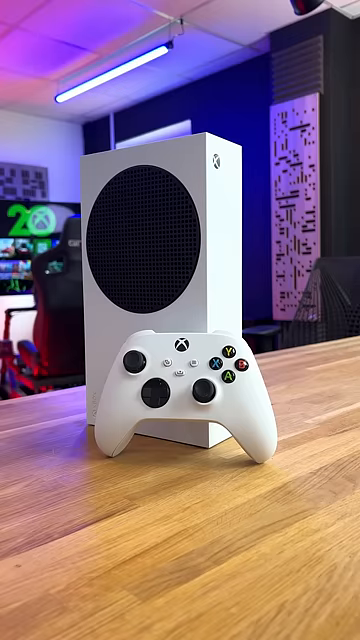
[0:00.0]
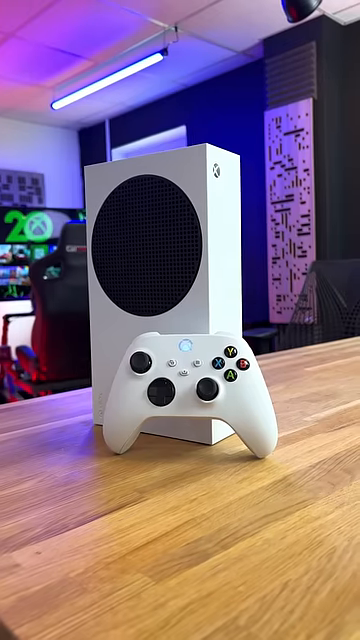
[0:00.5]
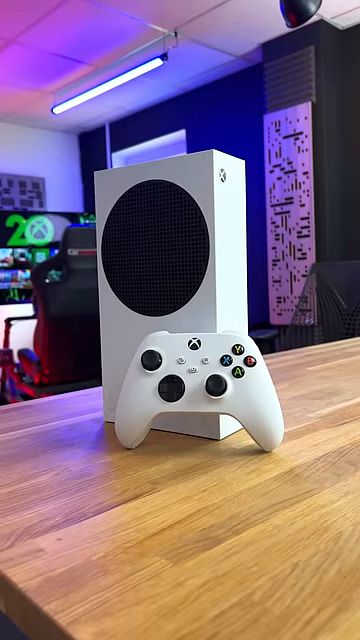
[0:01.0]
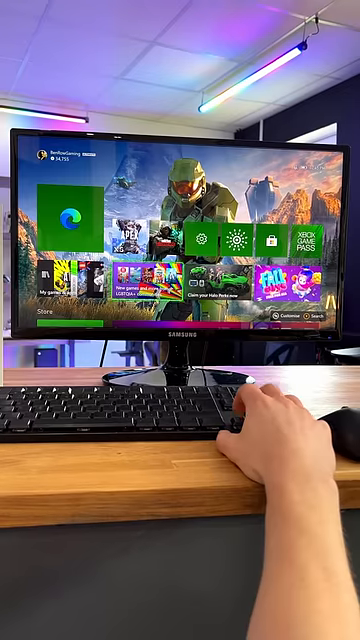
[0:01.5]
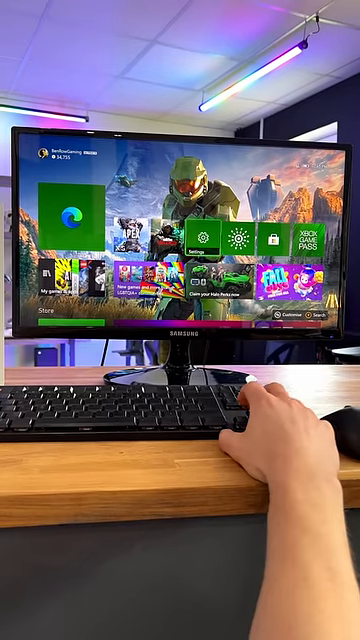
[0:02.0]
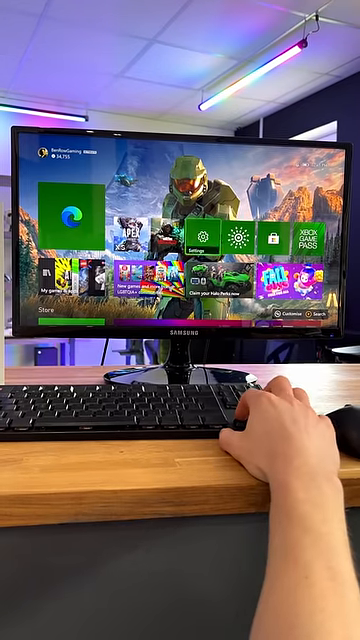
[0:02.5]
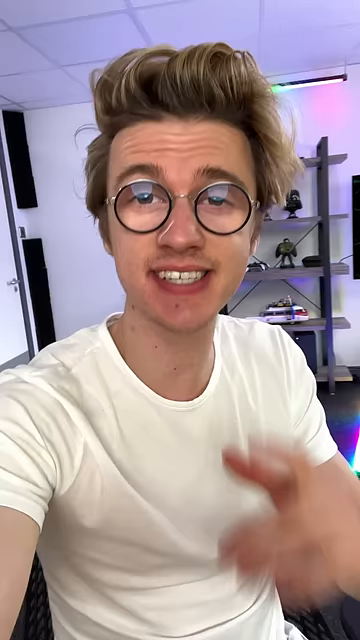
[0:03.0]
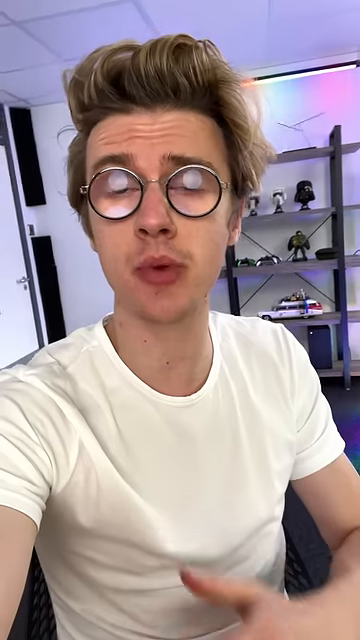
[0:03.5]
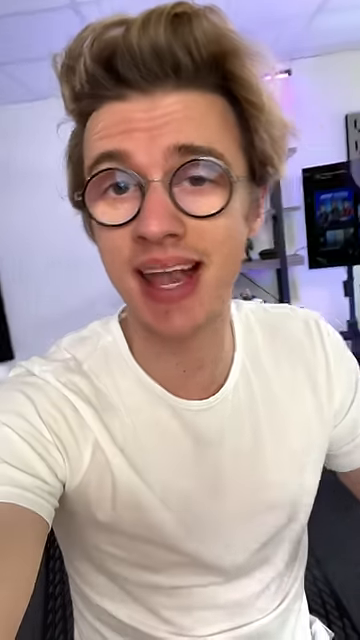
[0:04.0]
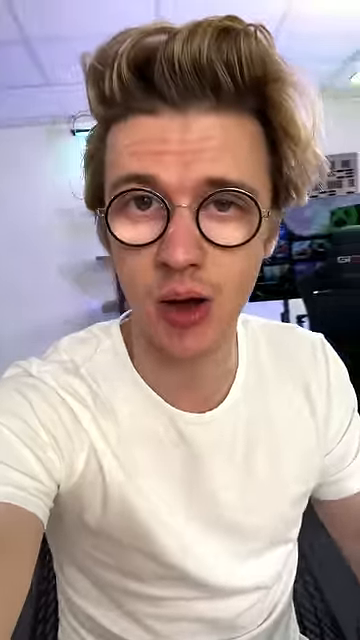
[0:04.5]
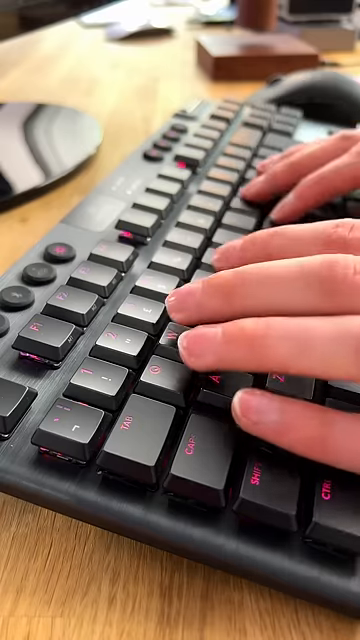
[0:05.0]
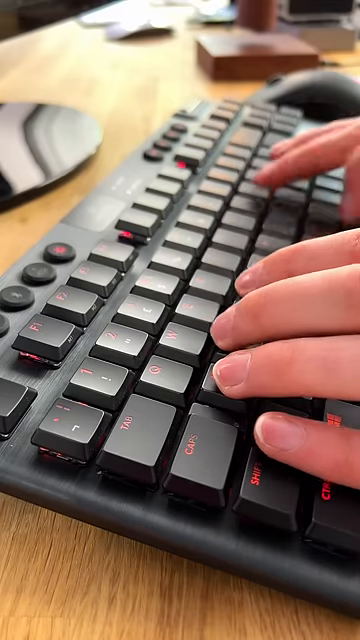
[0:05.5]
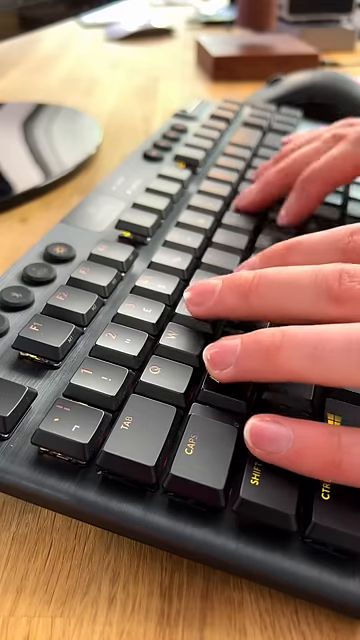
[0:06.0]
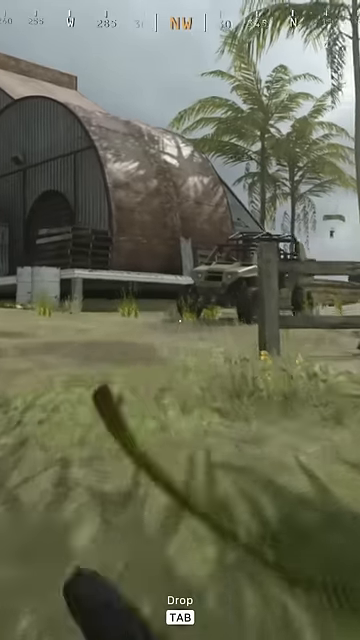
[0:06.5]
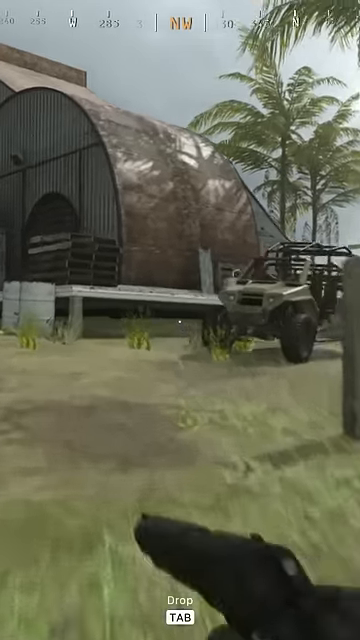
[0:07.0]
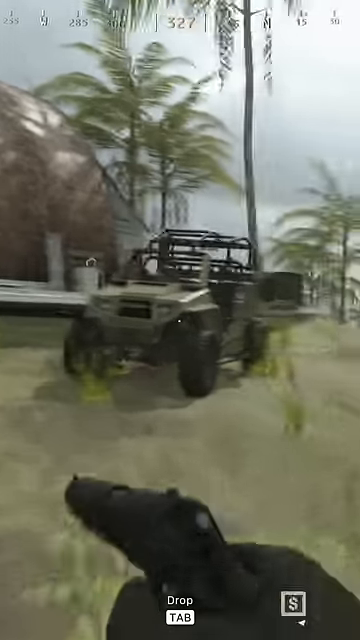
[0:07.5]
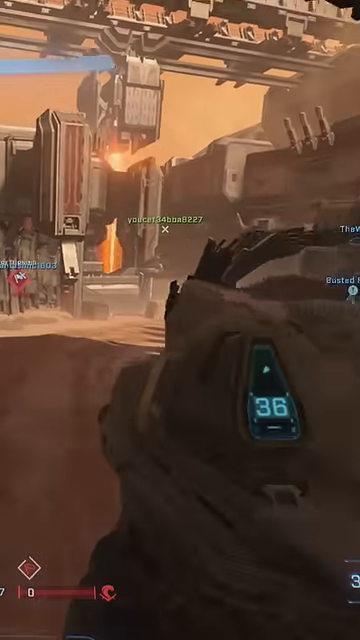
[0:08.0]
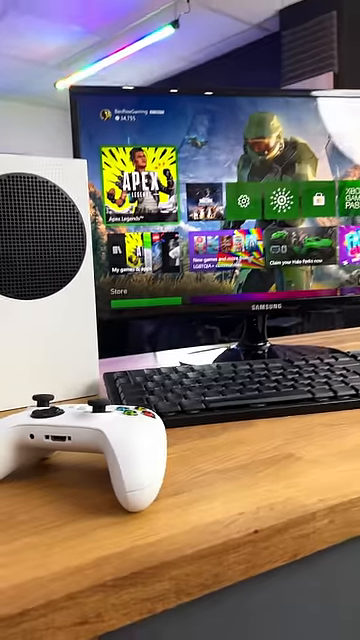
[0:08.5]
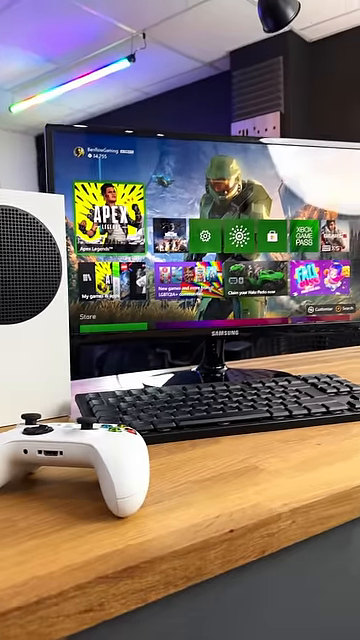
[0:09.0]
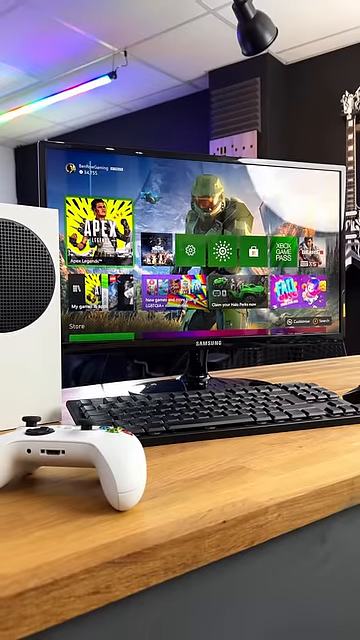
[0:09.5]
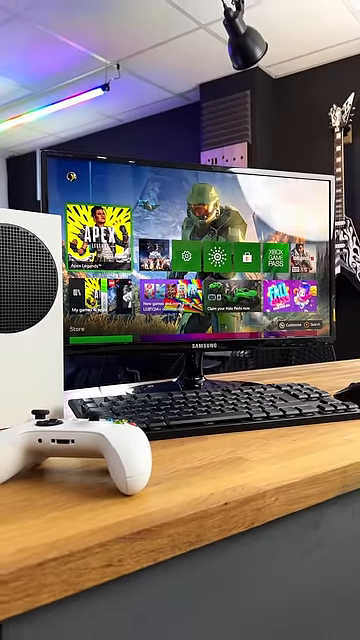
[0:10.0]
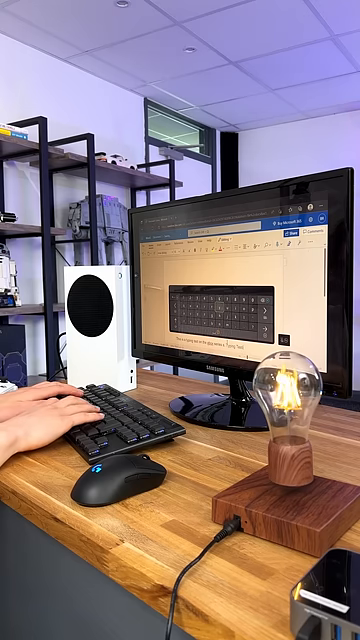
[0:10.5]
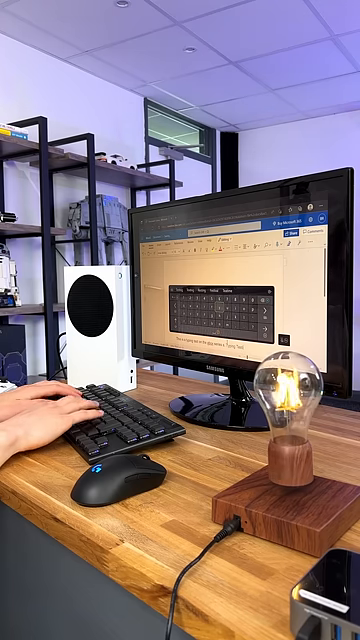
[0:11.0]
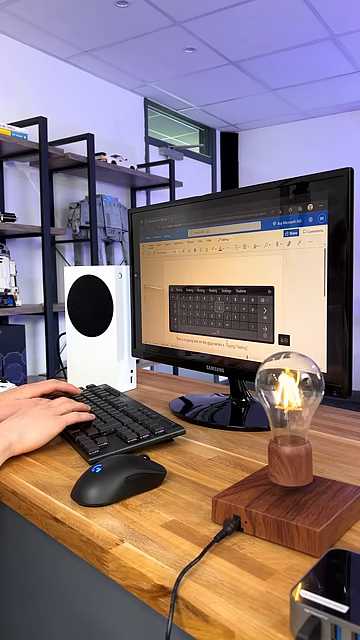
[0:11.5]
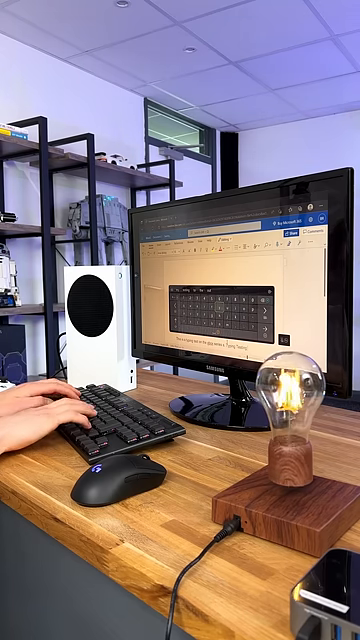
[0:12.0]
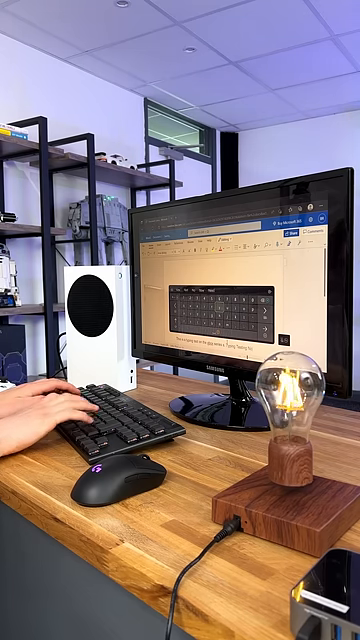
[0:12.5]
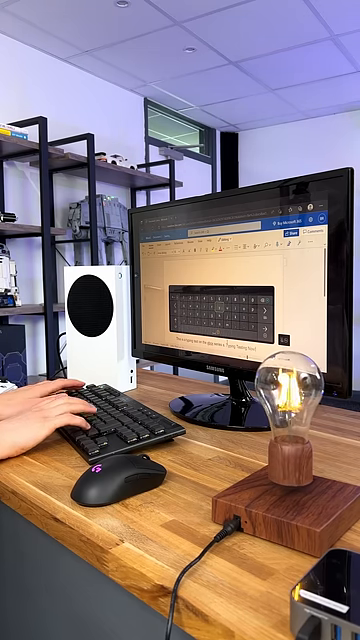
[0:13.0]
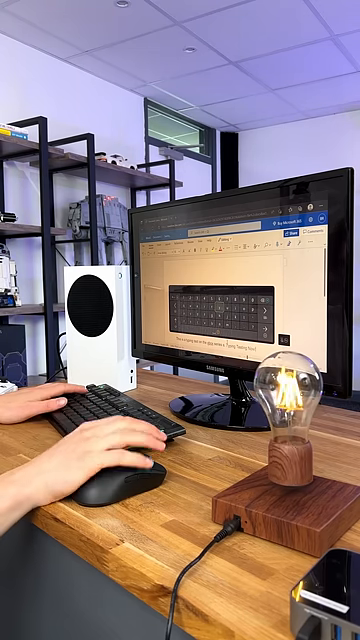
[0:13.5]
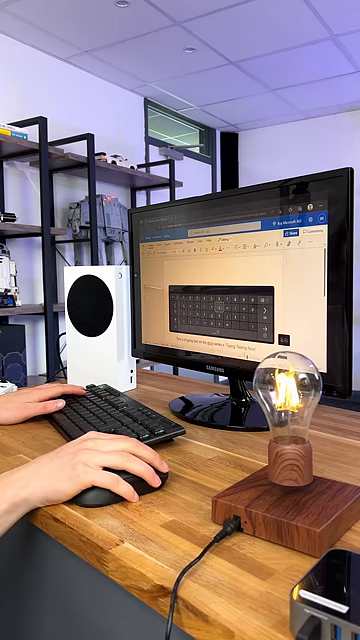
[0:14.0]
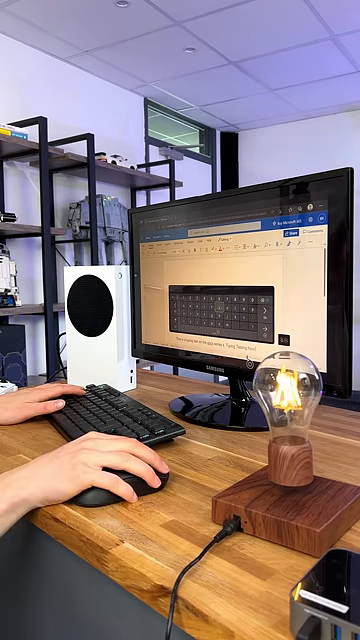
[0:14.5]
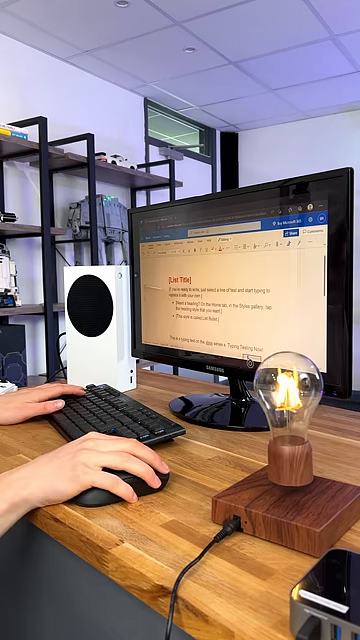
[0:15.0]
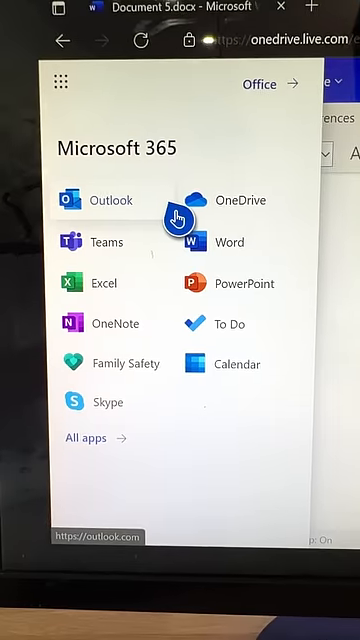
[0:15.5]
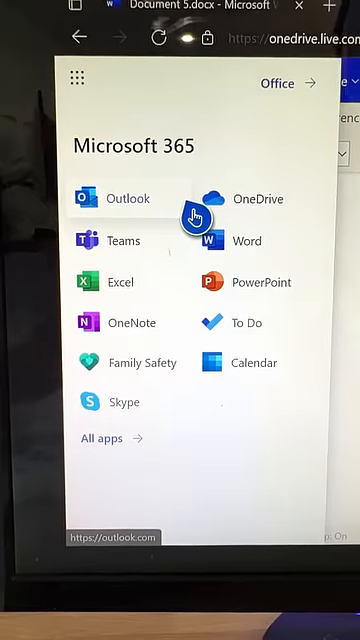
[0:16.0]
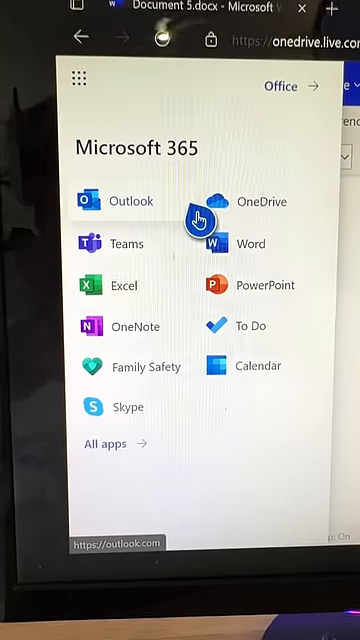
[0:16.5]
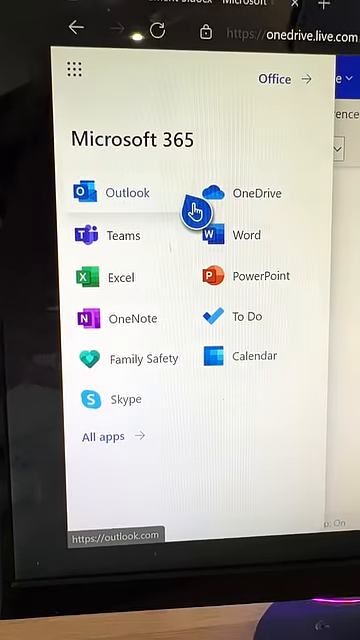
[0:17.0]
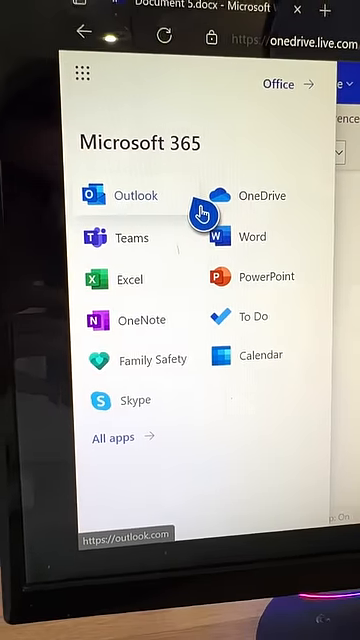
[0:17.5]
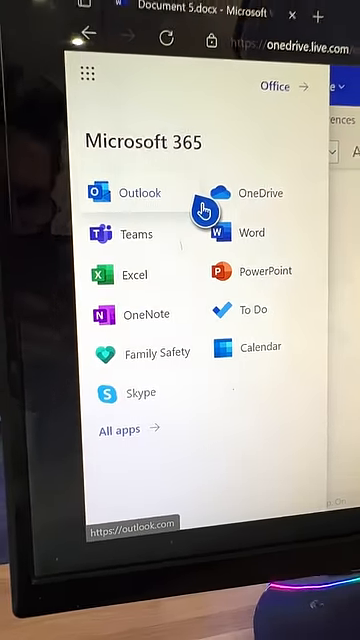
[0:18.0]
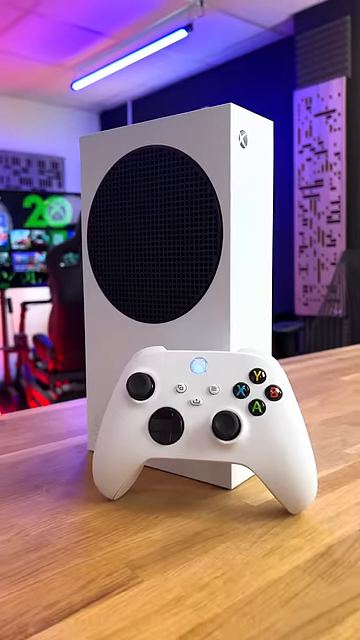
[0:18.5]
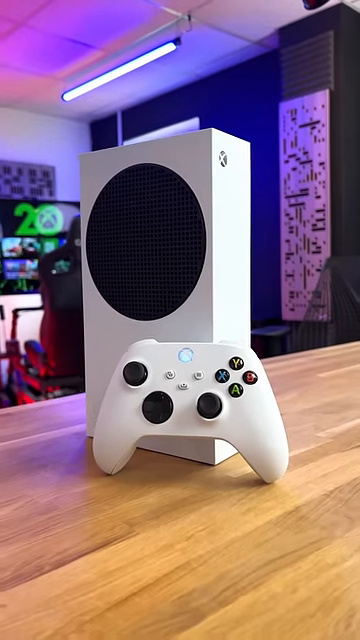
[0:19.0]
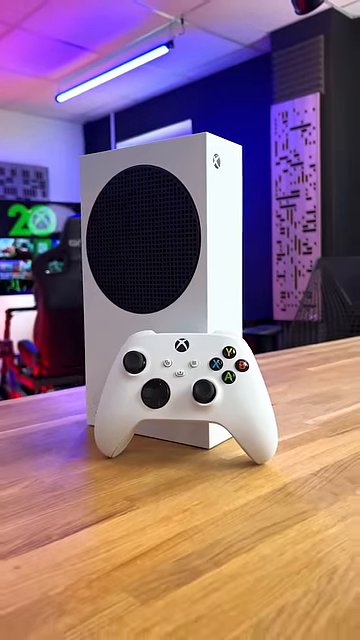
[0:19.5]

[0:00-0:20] What appears to be the new Xbox is shown: a white Xbox, turned on, seemingly a white special edition Xbox console with the joystick. A blonde-haired man with glasses is working on his PC. Next to the PC is a lightbulb that looks like an old lightbulb on a wooden platform. He works on a black keyboard whose letters and numbers light up in red, and he has a matching mouse whose emblem also lights up in red. He appears to be syncing his PC games and his Xbox games with each other on his PC, going through Microsoft 365 office to do so, apparently giving him Xbox capabilities through his PC gaming system as well.